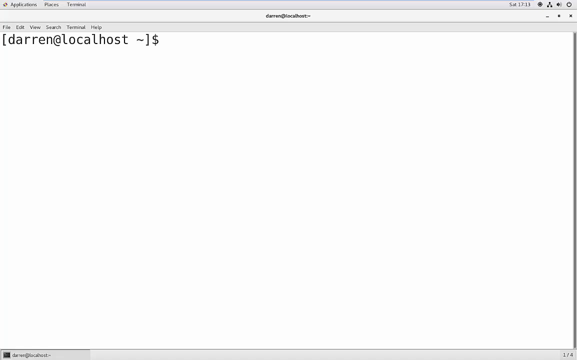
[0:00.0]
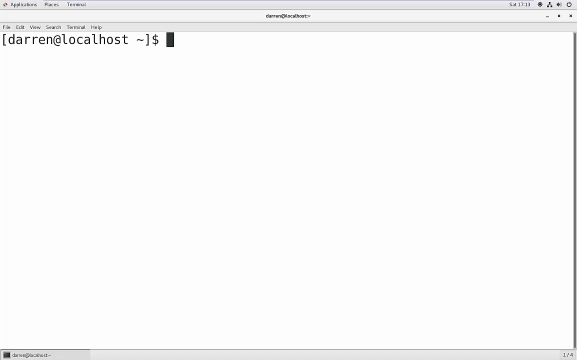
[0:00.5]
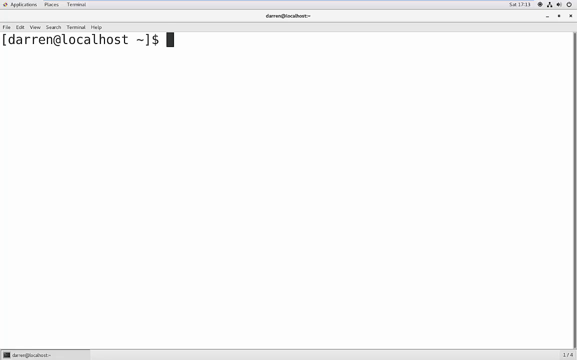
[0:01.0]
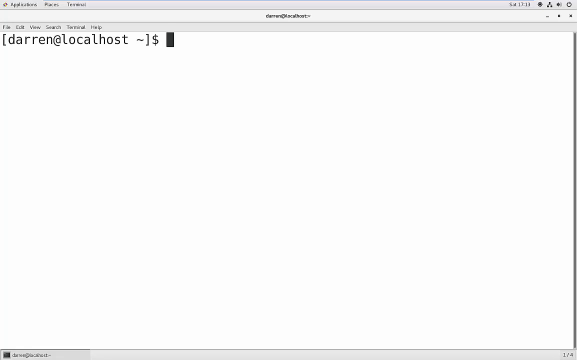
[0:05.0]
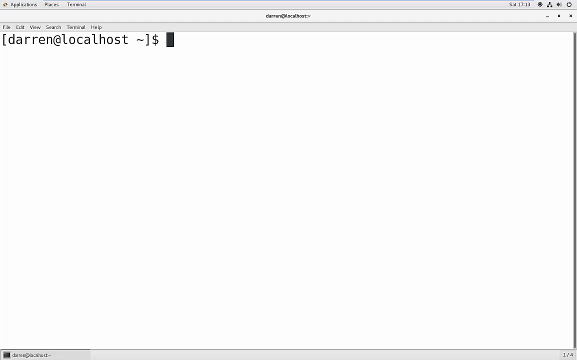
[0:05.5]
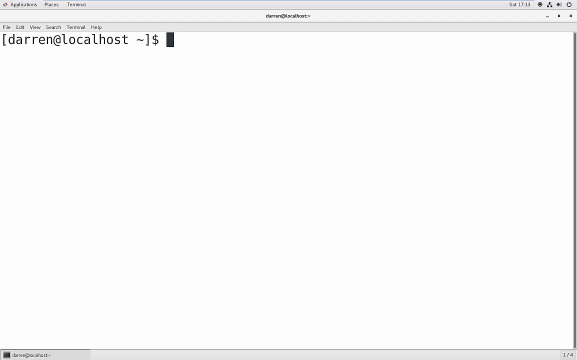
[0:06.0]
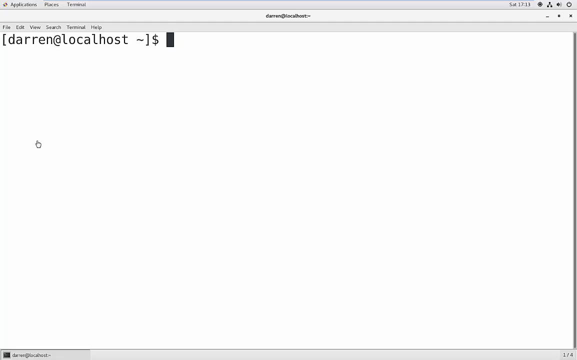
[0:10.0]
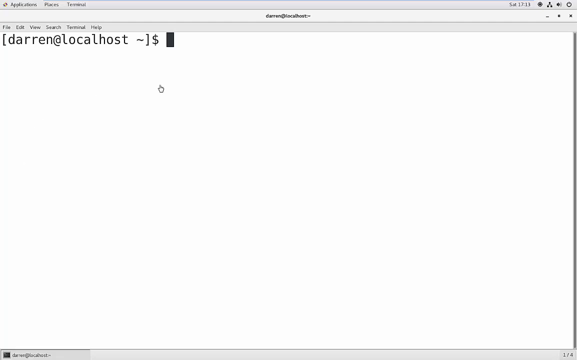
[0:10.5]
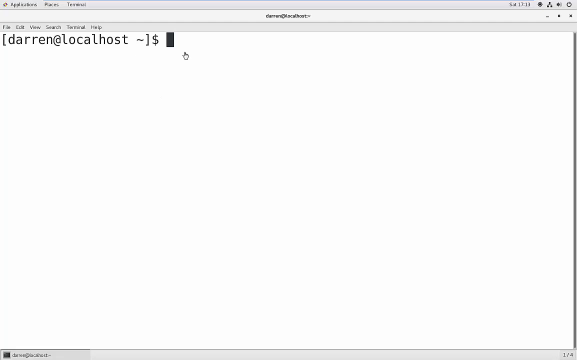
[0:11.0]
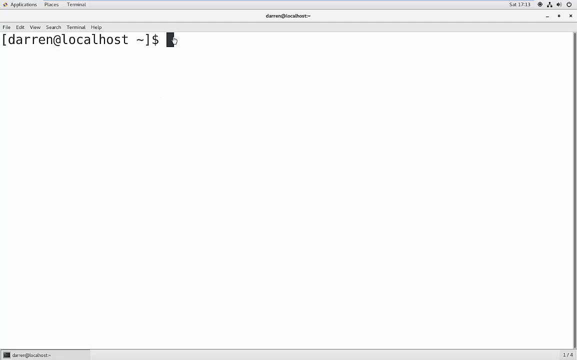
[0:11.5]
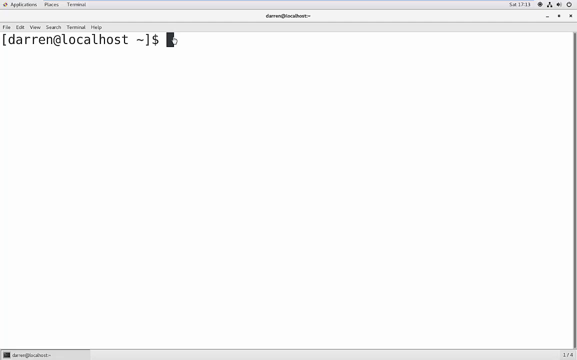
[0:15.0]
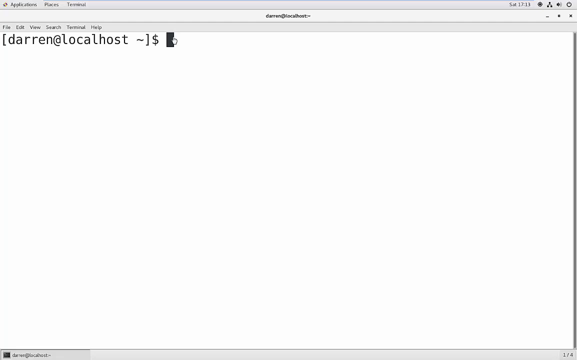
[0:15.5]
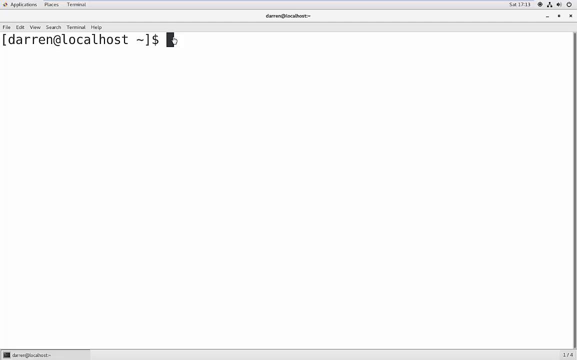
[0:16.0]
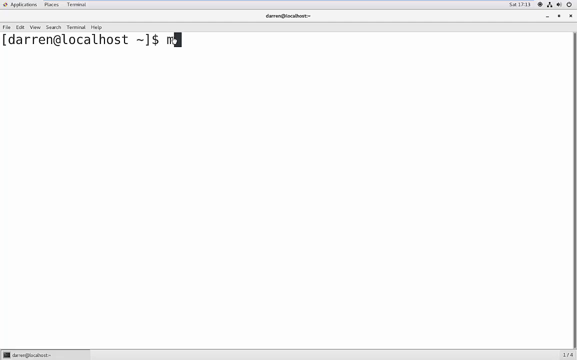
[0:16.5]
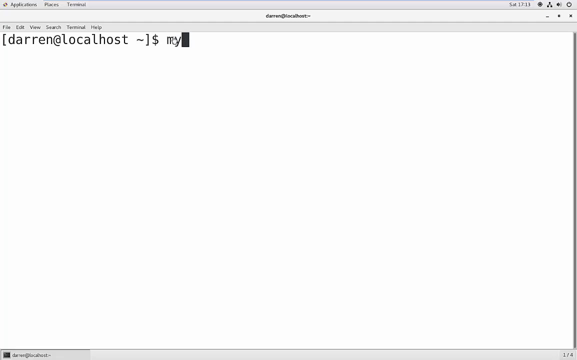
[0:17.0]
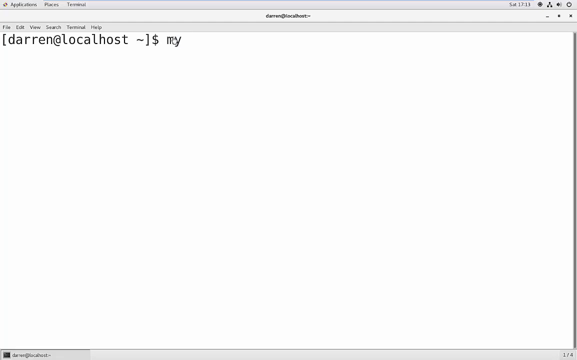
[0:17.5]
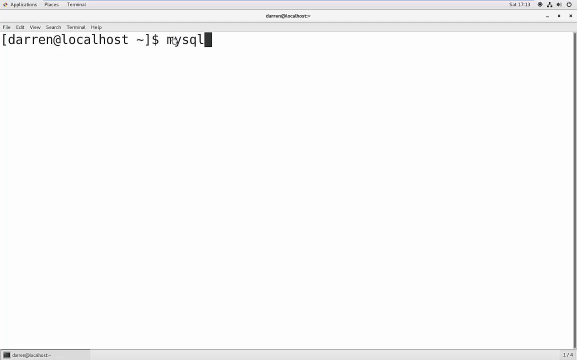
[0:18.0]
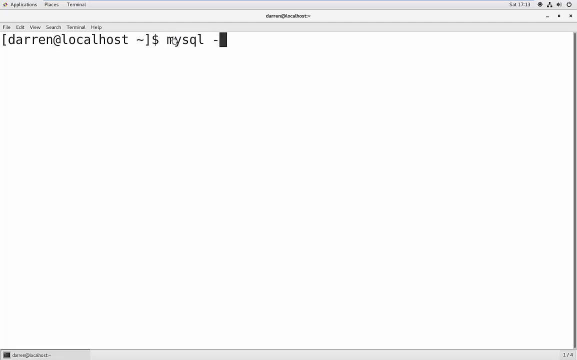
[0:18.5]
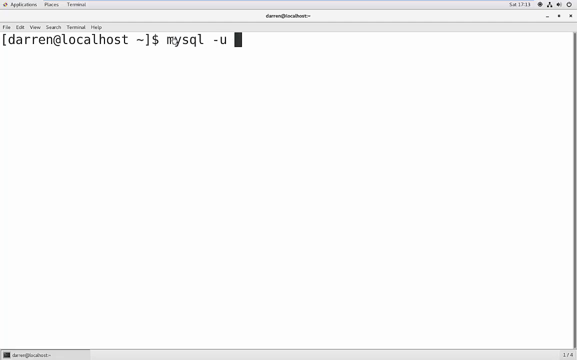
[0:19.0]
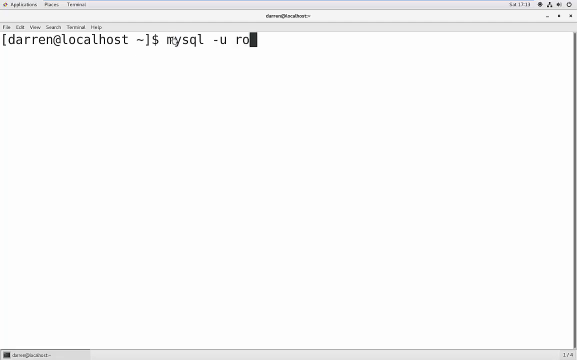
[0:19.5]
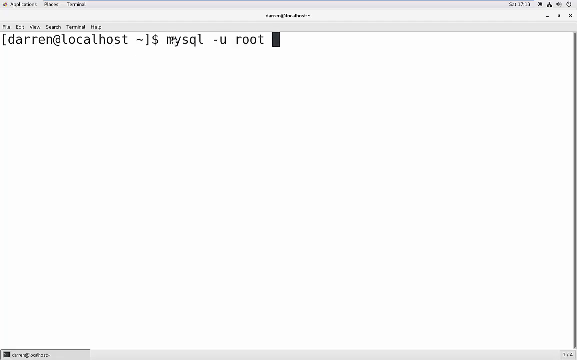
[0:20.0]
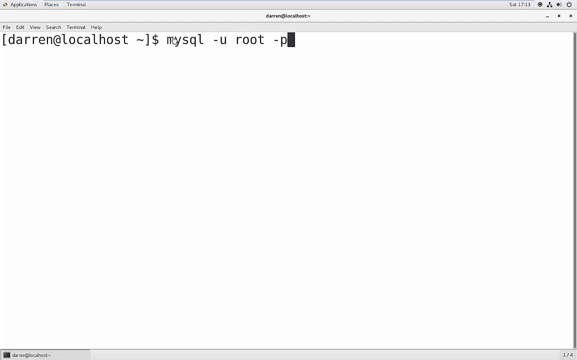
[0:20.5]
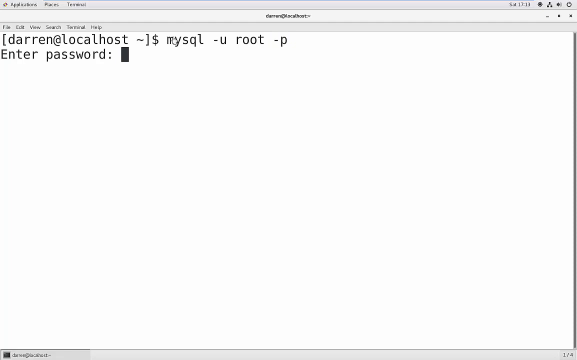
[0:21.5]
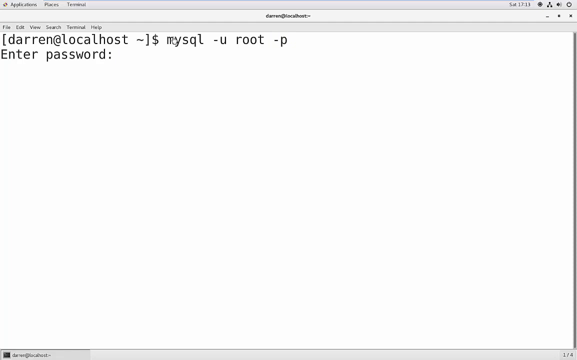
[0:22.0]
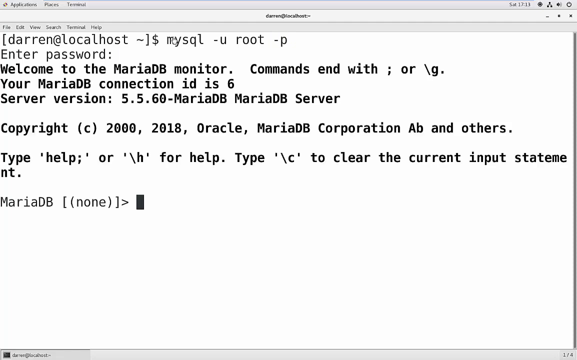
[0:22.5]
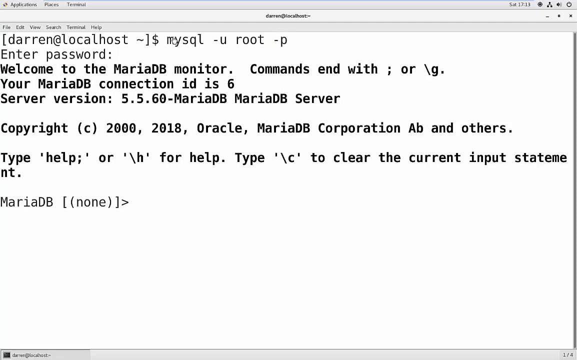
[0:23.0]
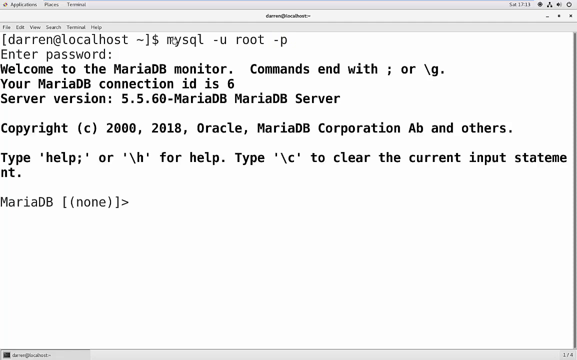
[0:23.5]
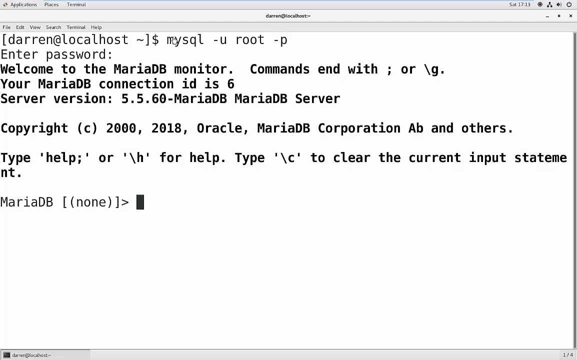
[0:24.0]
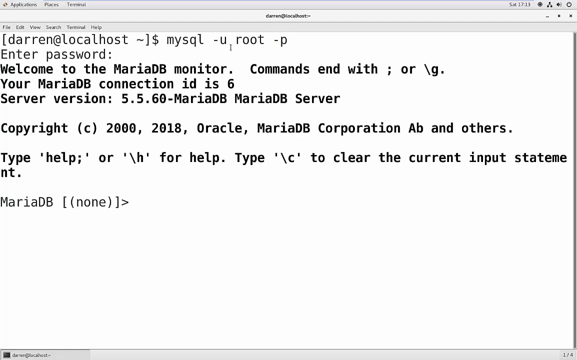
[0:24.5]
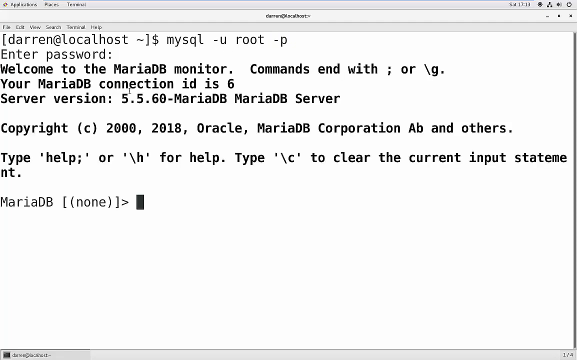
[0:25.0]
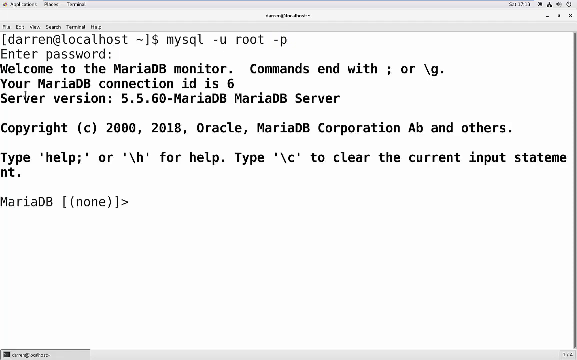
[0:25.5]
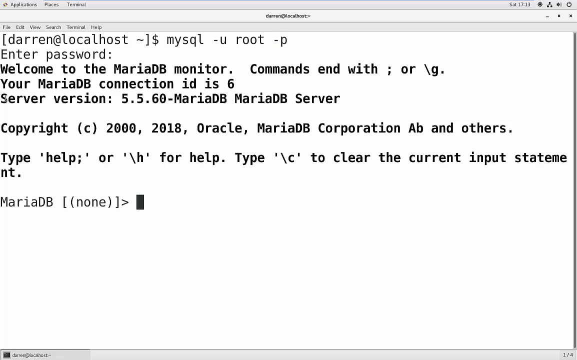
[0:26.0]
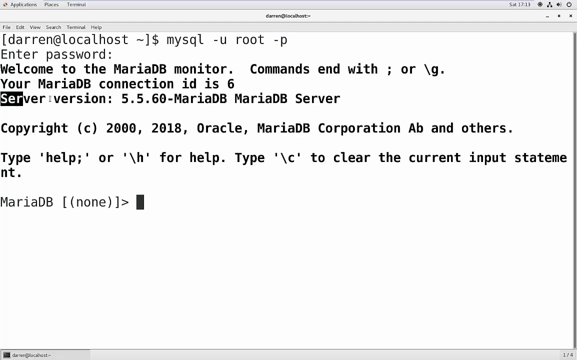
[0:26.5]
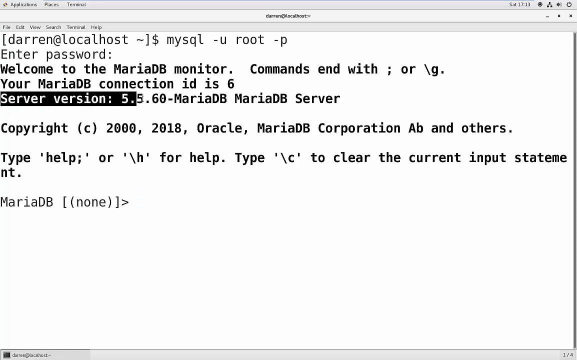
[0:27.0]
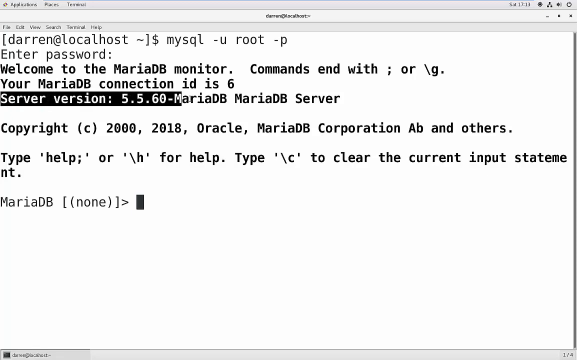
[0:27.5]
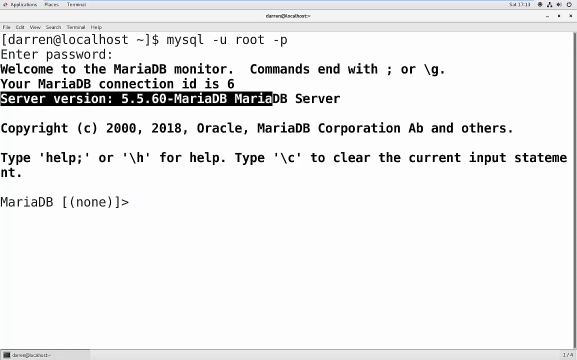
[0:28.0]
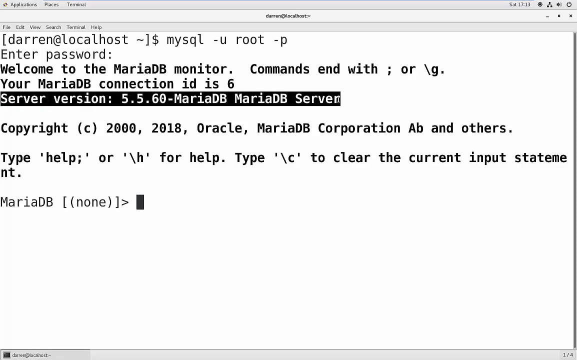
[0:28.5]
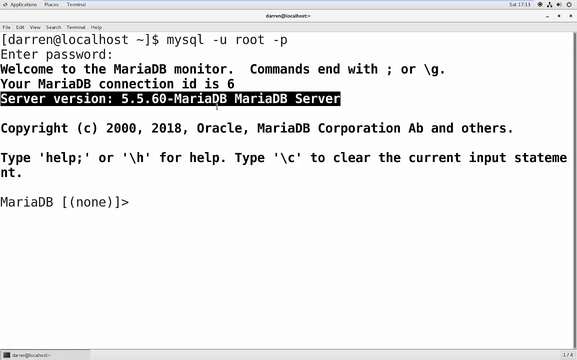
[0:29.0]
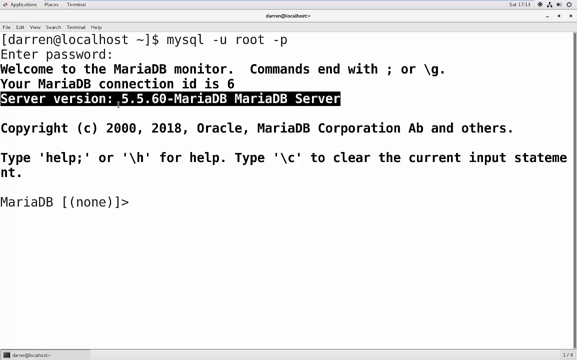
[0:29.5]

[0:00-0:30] The video opens on "Darren at Localhost," a coding program, where someone appears to be writing code and hacking. The person at the computer clicks a button to start writing other things, and code text on the screen shows that he first gains access to Maria's monitor and then to Maria's computer. The setting is a text box, and the only activity is the hacking. The main subjects are Darren and Maria. The text does not say what he is doing on Maria's computer; it only says that he has gained access to her server, and he can now type on her computer.